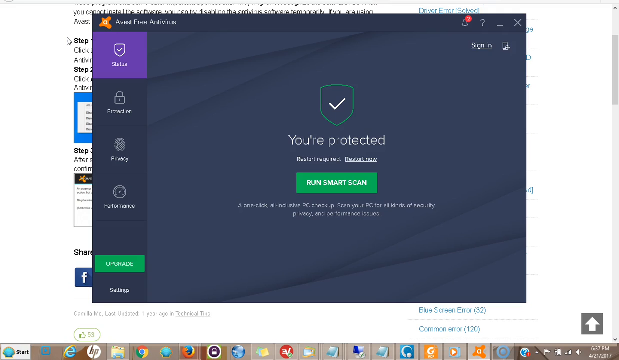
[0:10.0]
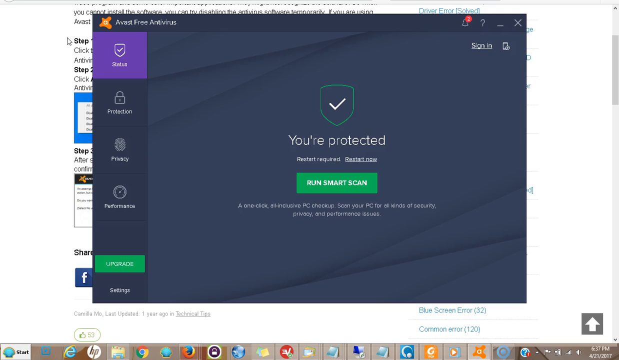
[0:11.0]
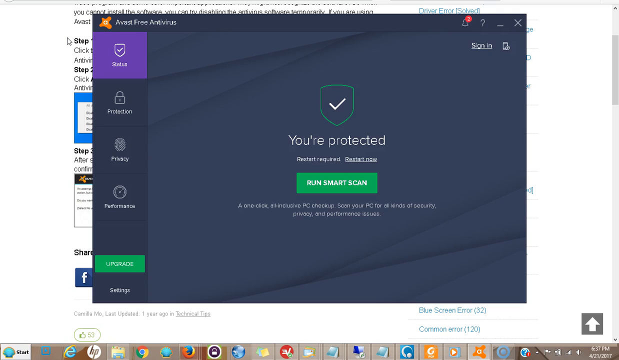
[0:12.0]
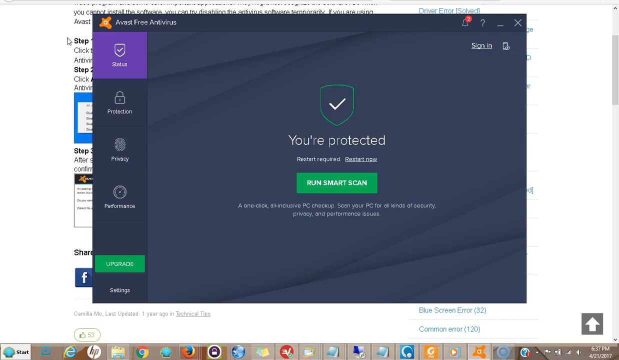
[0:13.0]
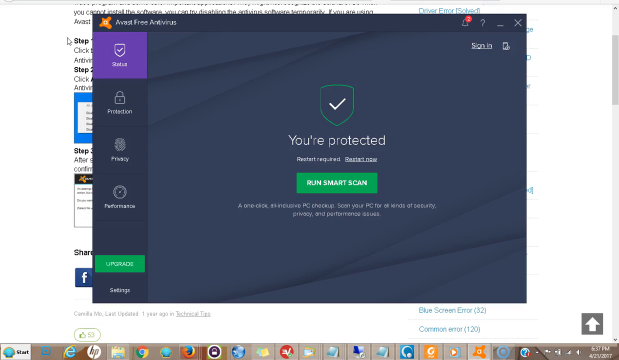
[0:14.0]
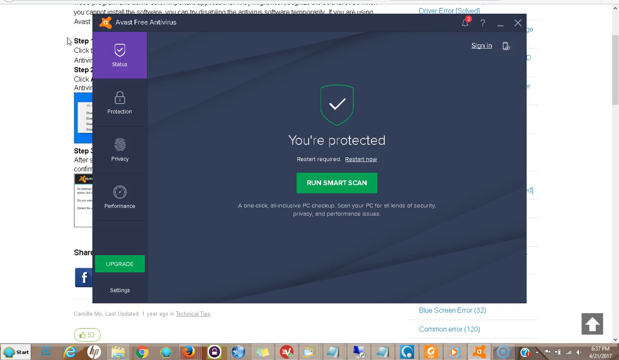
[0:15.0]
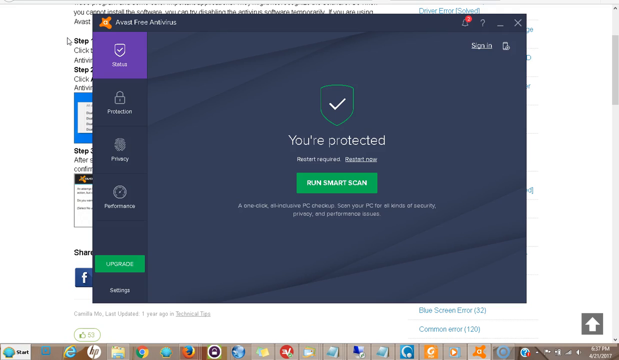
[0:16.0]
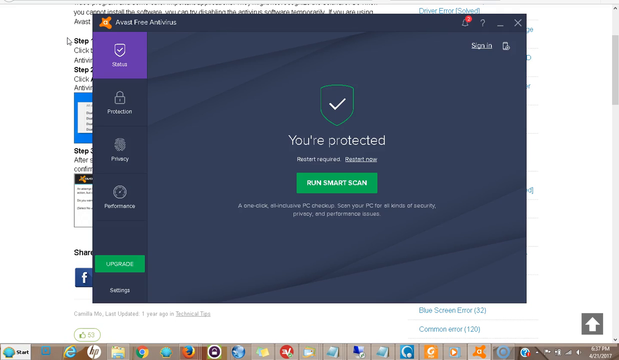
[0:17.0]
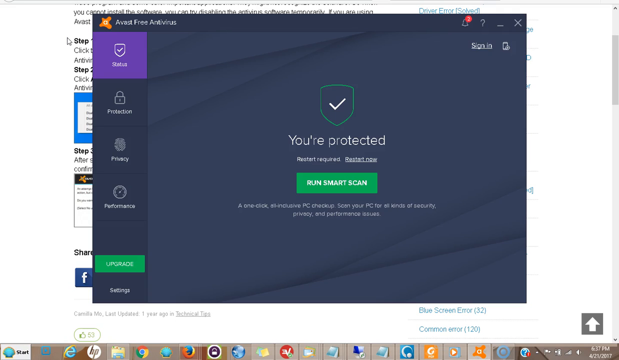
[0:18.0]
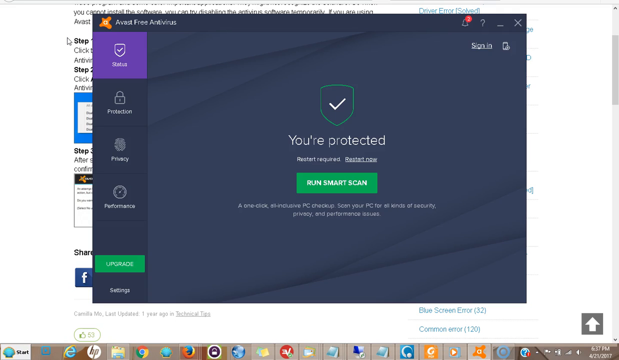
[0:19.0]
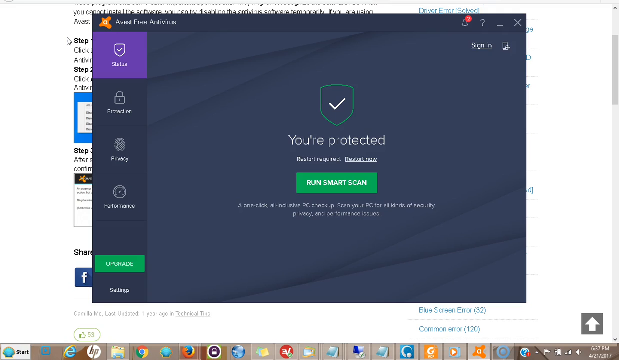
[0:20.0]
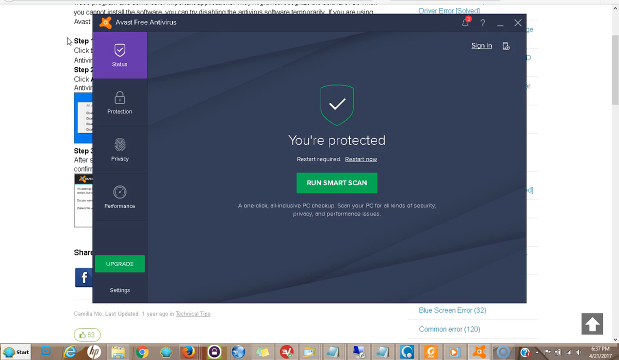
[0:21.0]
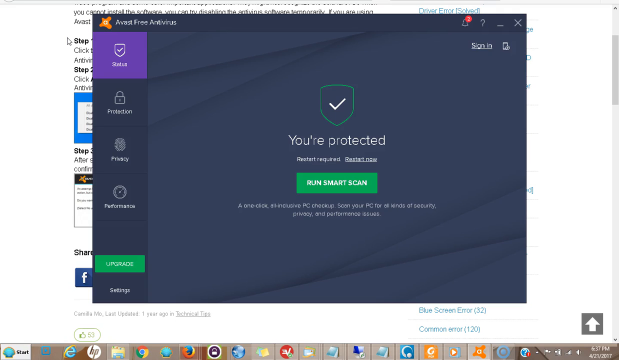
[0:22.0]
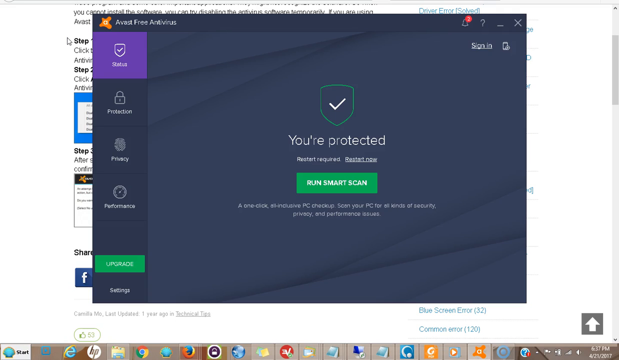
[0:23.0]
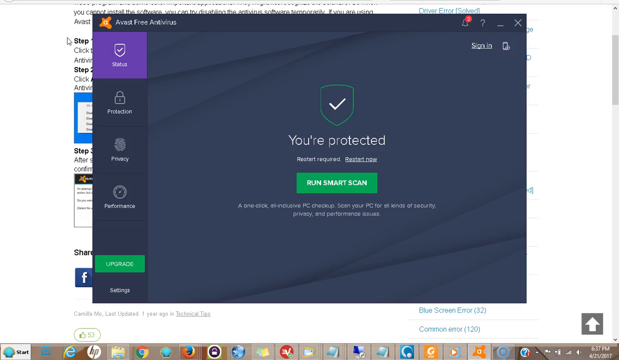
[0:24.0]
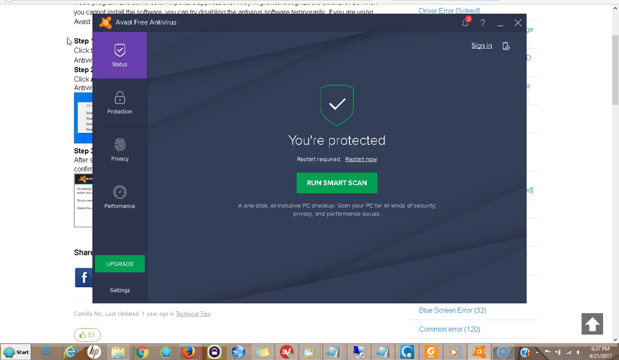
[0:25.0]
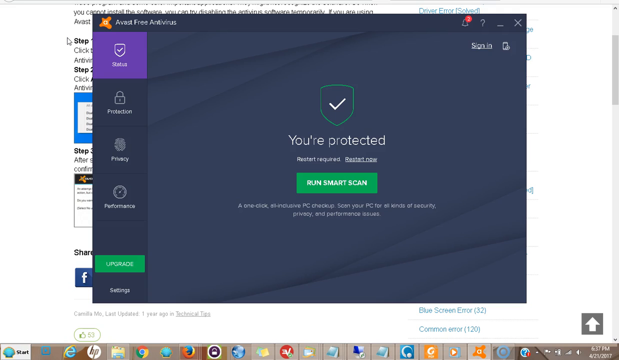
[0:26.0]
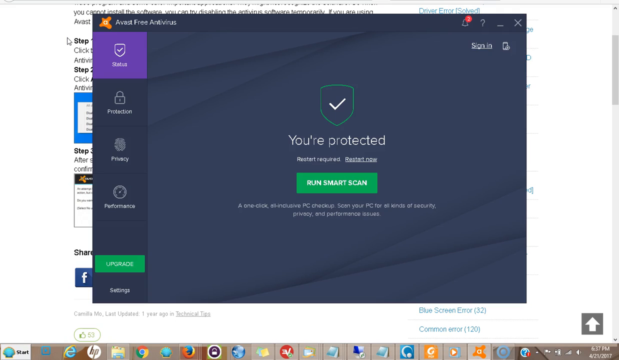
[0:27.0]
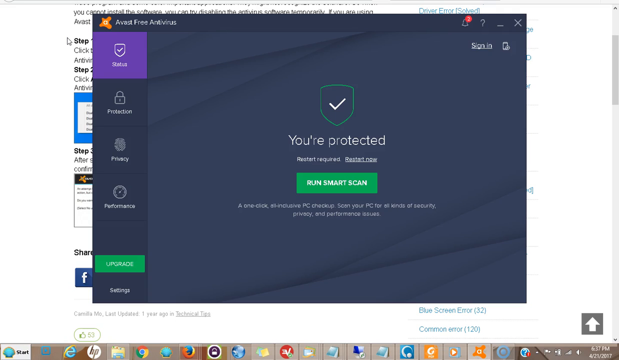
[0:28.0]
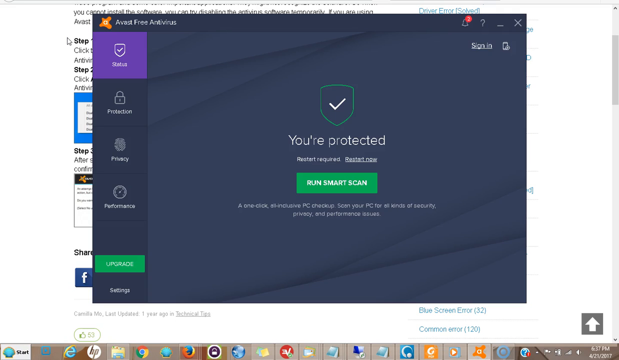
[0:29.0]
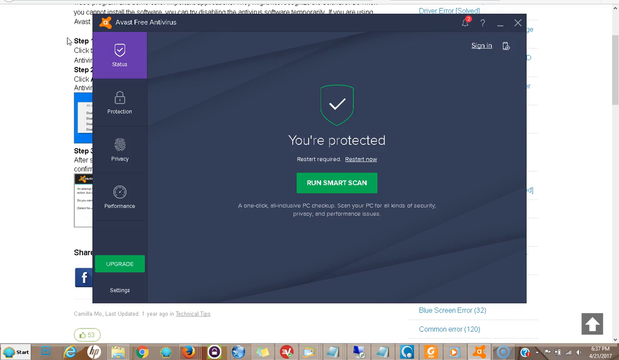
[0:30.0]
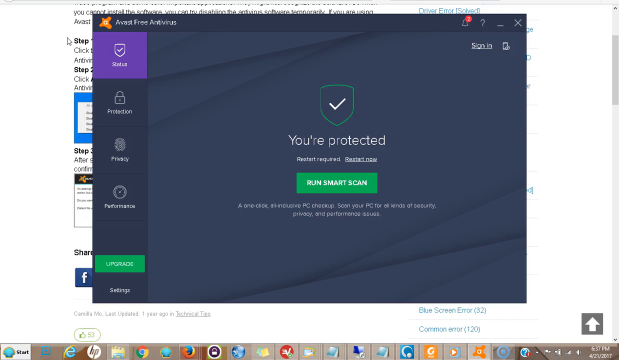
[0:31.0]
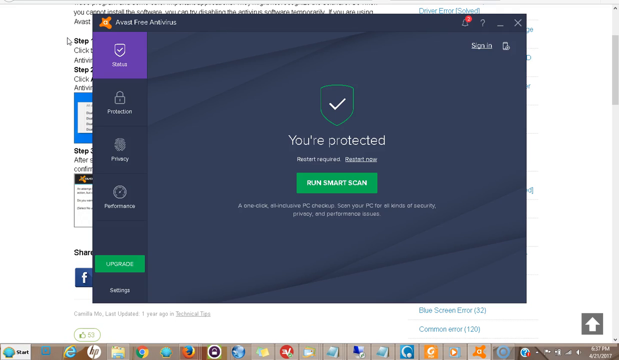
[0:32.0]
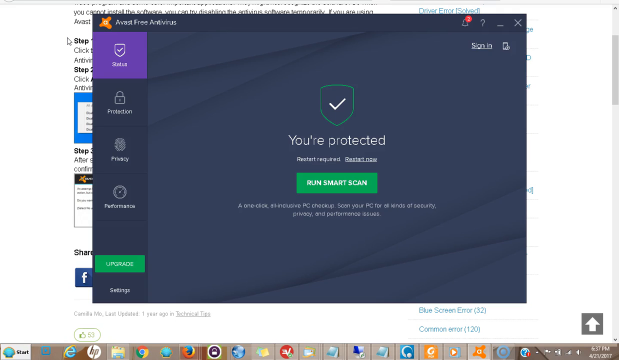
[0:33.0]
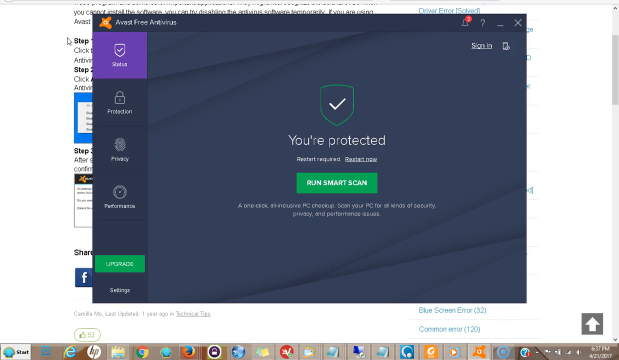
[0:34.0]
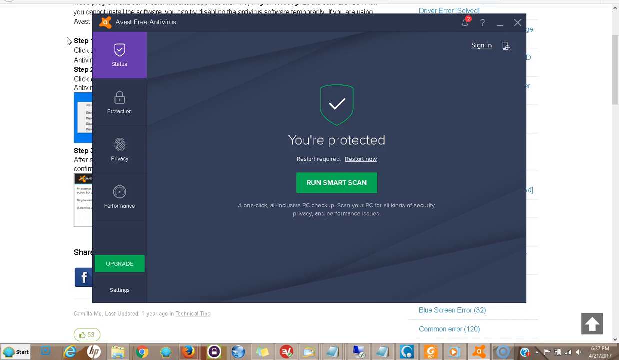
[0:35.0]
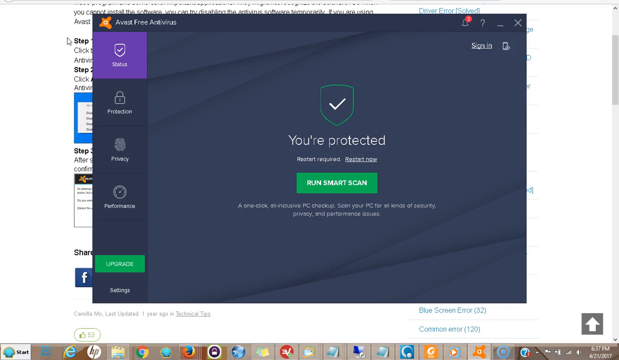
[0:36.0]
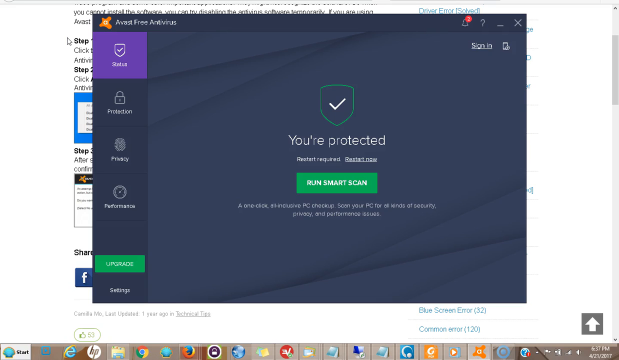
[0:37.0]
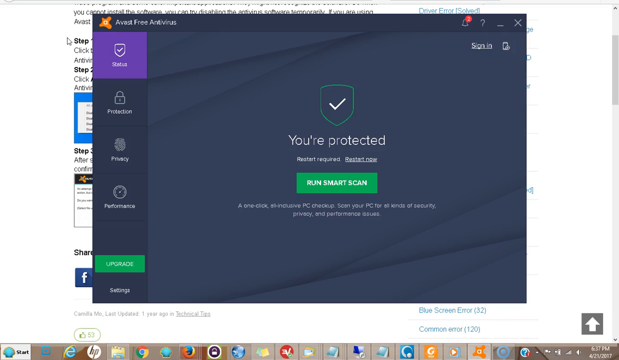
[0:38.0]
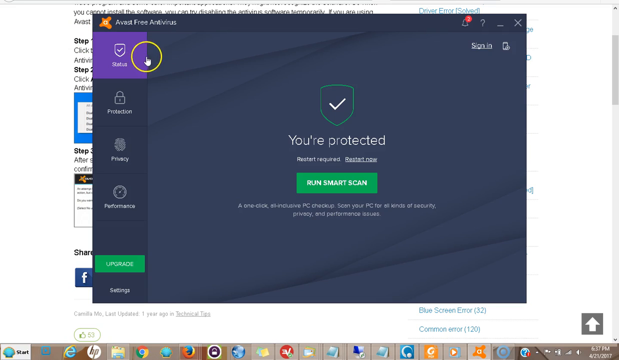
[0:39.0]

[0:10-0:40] The front page of the pop-up remains on screen with nothing selected. In its top right corner is a notification bell showing two notifications, and just below it is a sign-in button with no username, indicating the user is not signed in. The computer appears to run an old version of Windows, with an older search bar along the bottom and many old icons, including Firefox, Chrome, Notepad, Control Panel and other apps. The time reads 6.37pm and the date reads 4-21-2007. The user seems to be using Window Explorer, and there is a star on the left that looks like the globe shape.